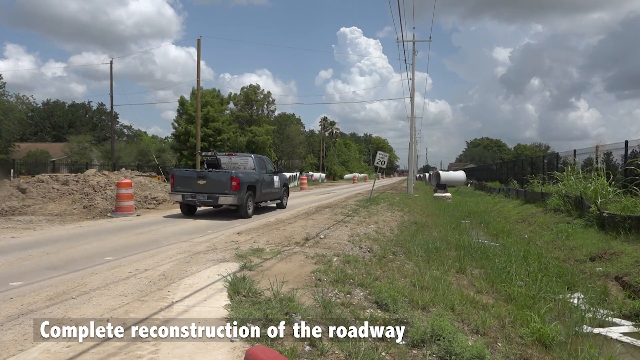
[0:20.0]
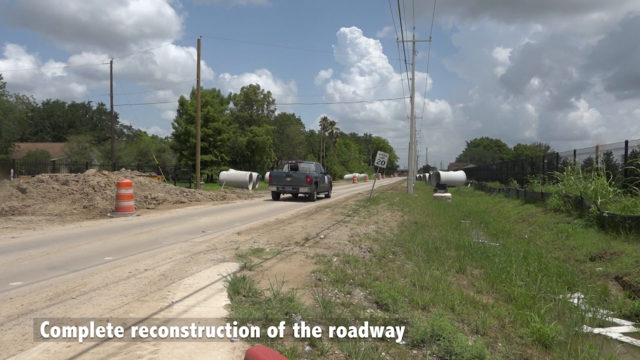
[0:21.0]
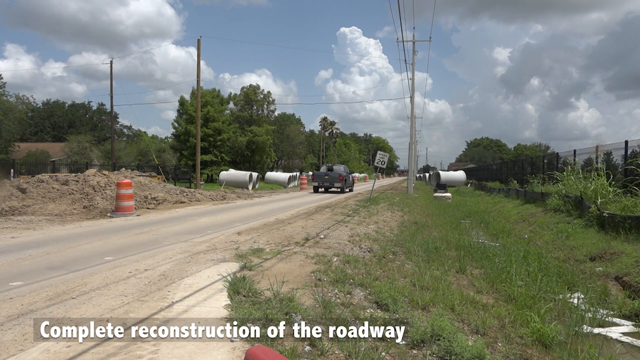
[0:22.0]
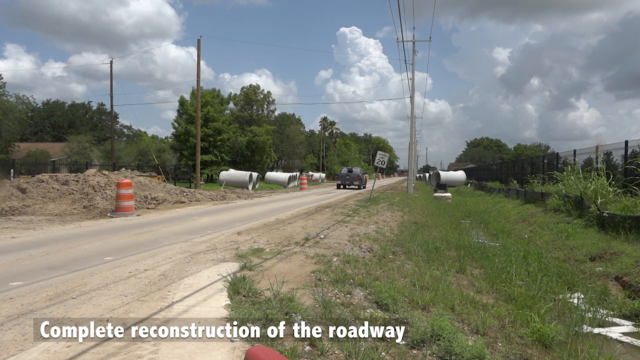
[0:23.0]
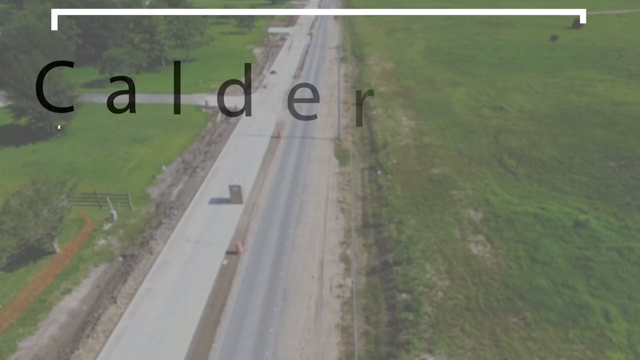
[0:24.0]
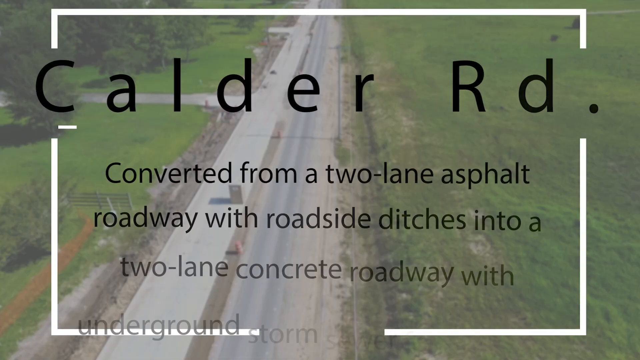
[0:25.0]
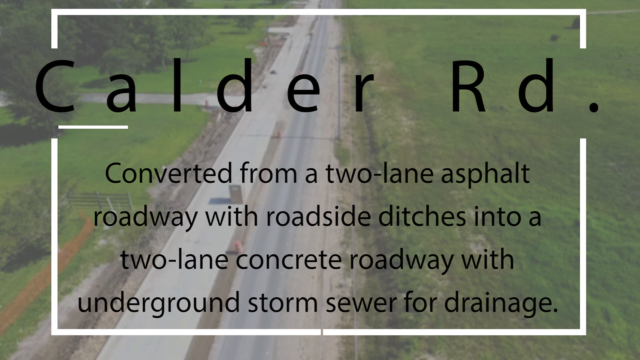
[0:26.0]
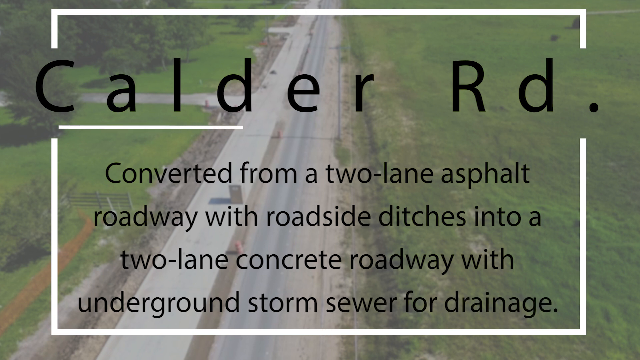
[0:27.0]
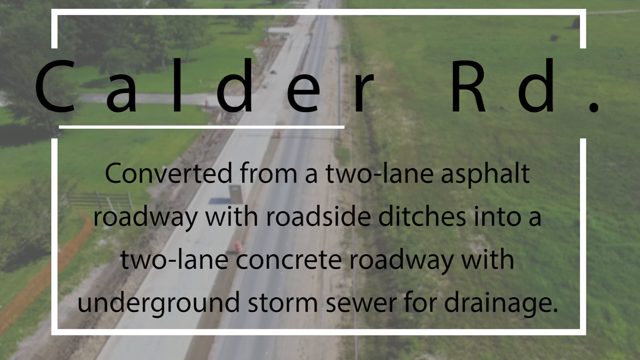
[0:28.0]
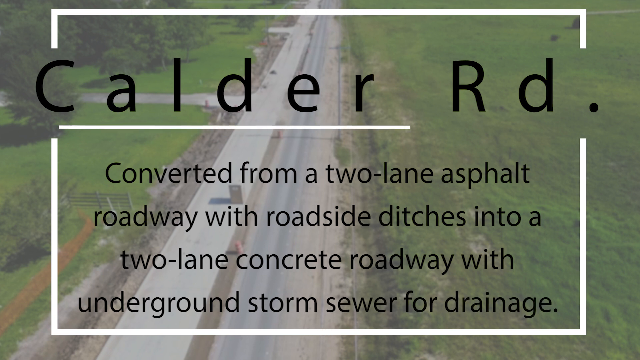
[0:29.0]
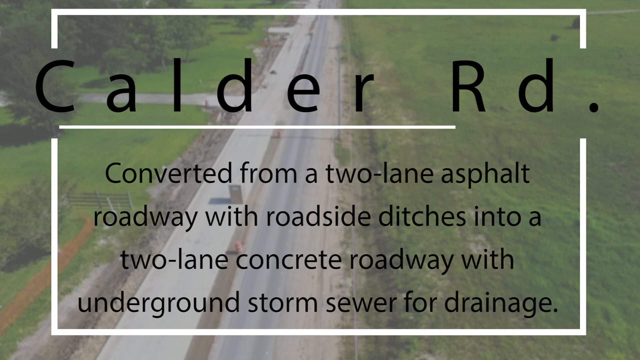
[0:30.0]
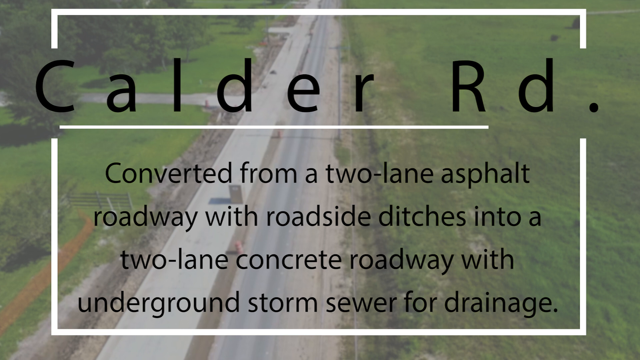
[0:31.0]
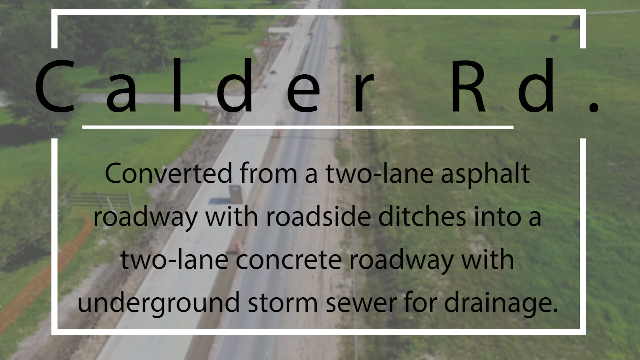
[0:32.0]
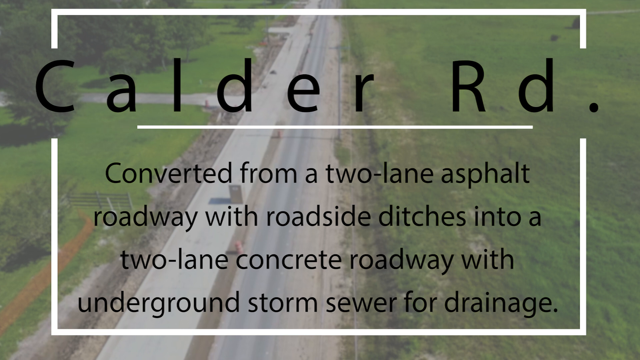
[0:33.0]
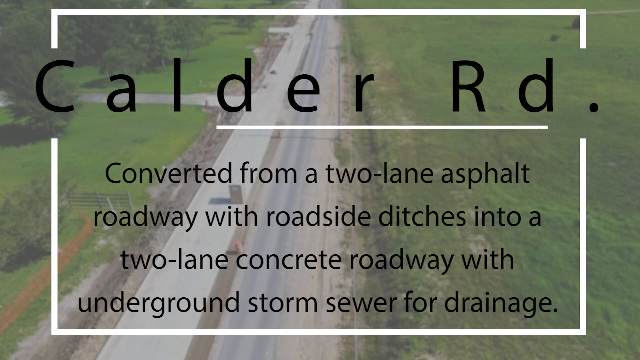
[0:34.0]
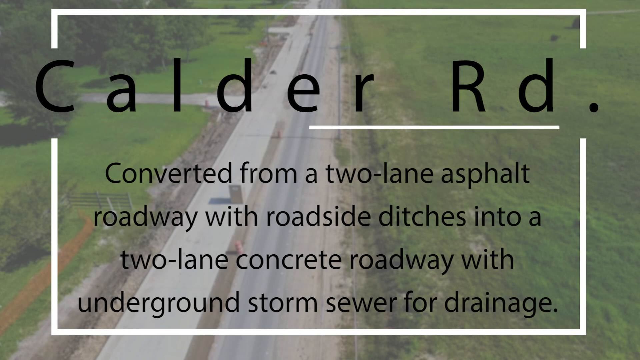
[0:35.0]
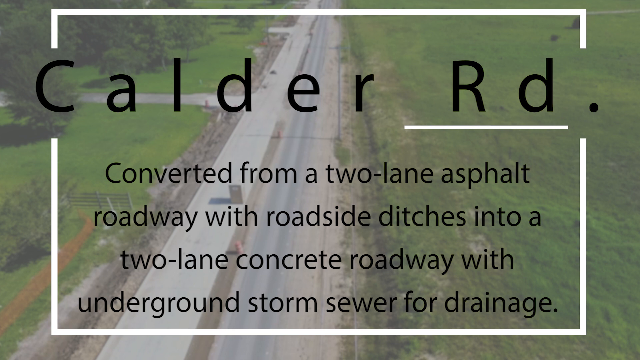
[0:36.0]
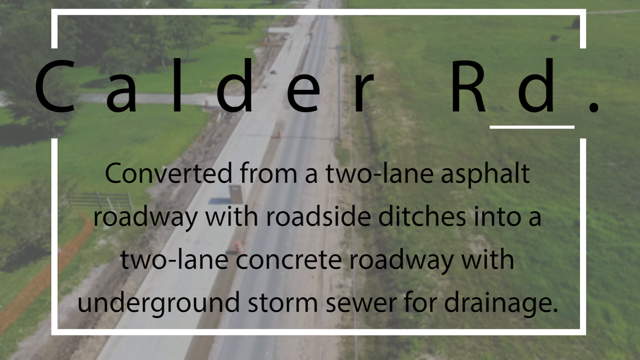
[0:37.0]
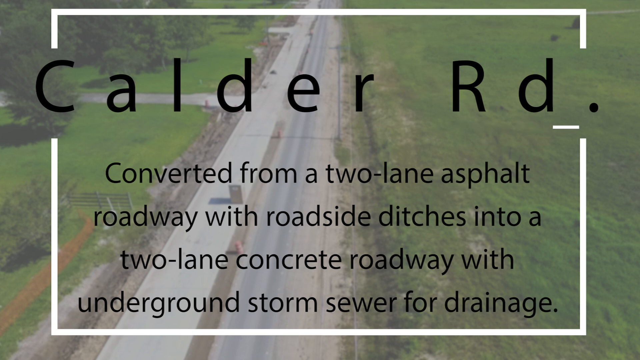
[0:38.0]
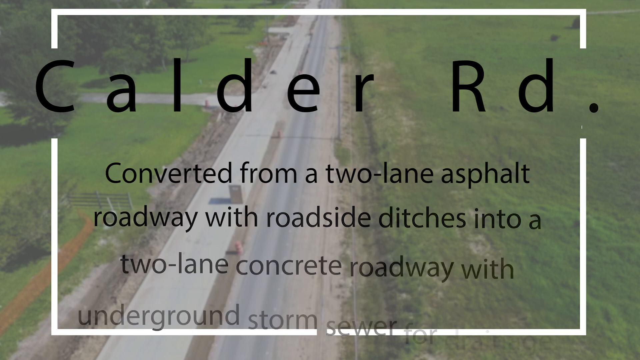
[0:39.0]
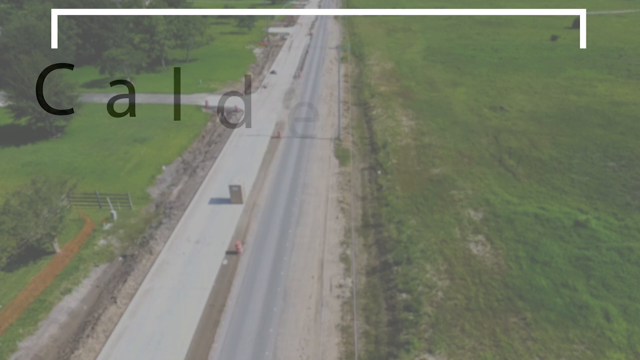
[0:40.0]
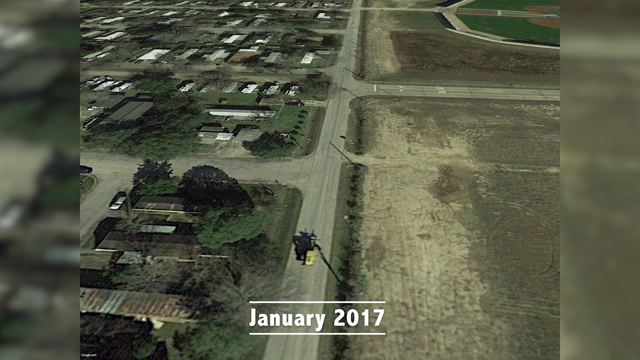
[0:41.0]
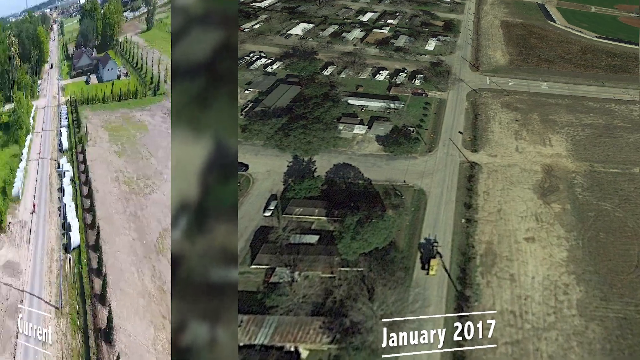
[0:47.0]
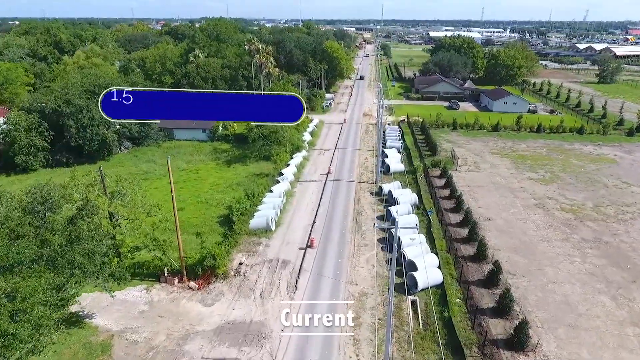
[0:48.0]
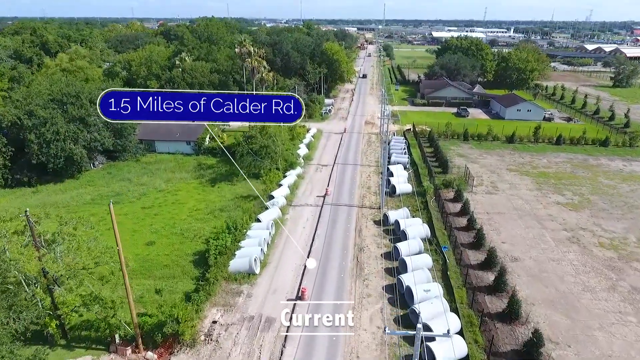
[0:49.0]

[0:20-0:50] As a gray truck drives through, a mound of dirt is on the left side with one of the orange and white striped cylinders, and large white culverts are laid out by the road. Telephone poles stand on each side and trees are in the distance. An aerial view of the street appears with text on the screen describing what Calder Road is going to be like. A white line goes from the left side of the screen to the right side, underlining Calder Road, and then disappears until it vanishes. The video cuts to a picture from January 2017 showing a tall crane, a lot of empty dirt on the left and right sides of the road, and other developments and houses on the left side. The screen shifts to blue, a caption appears over the blue, and the view returns to the bird's-eye view of the area and the 15 miles of Calder Road, with culverts lying on each side.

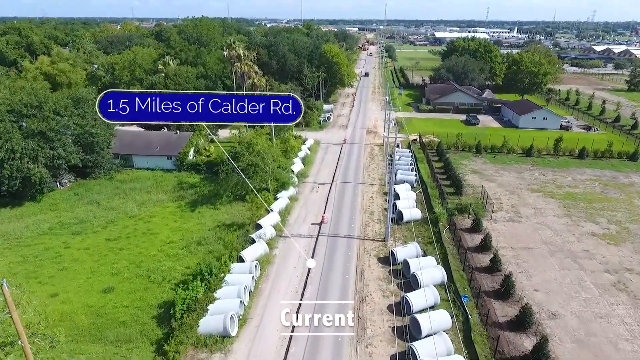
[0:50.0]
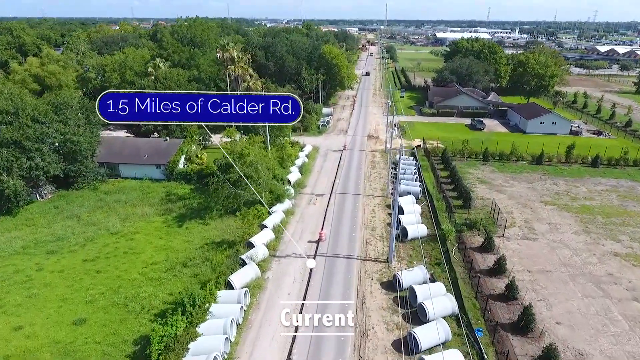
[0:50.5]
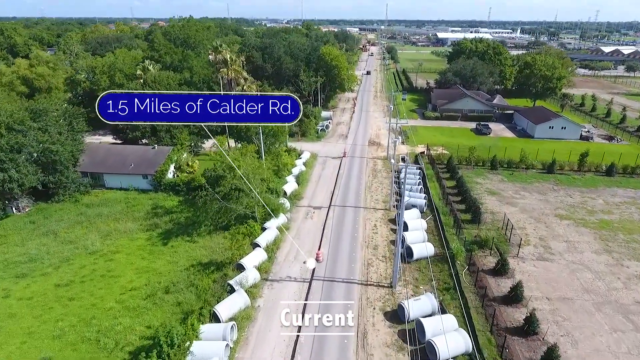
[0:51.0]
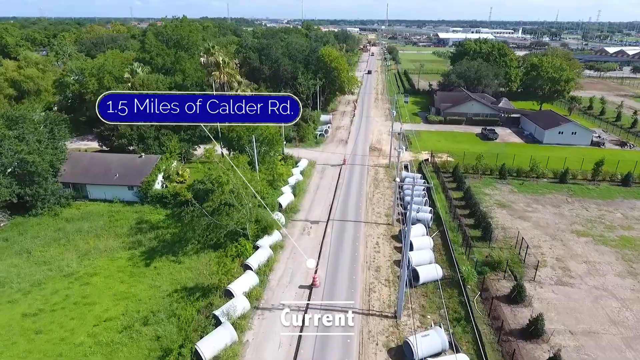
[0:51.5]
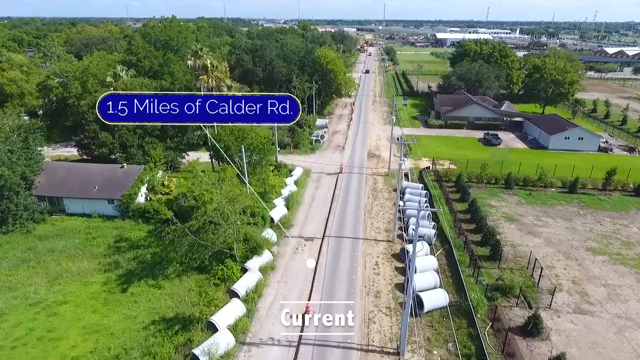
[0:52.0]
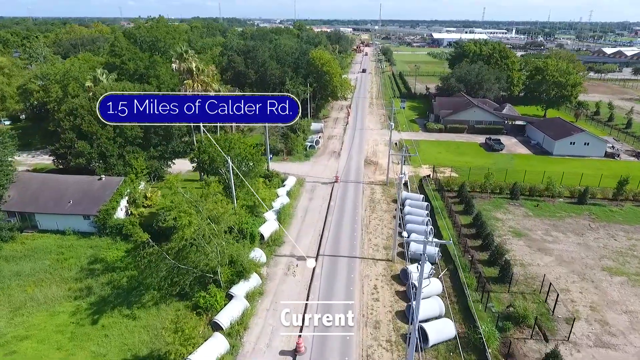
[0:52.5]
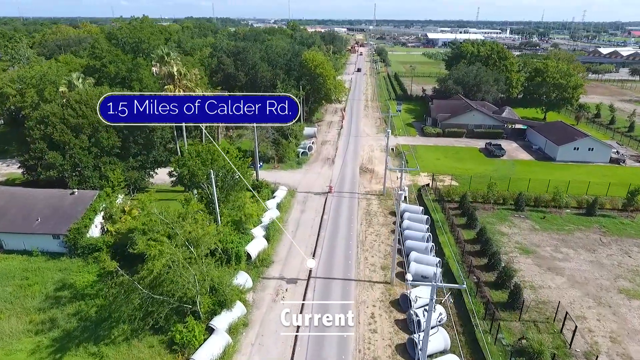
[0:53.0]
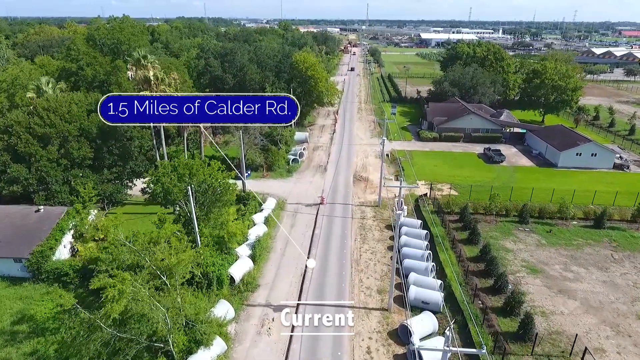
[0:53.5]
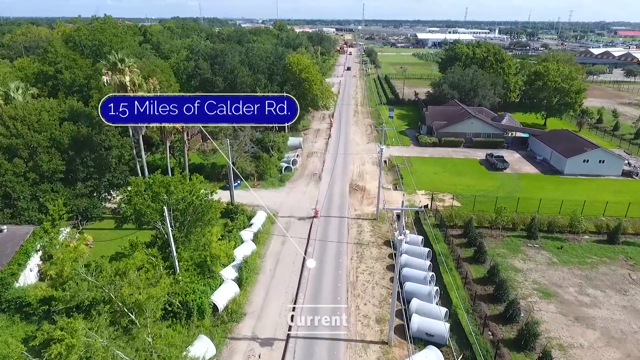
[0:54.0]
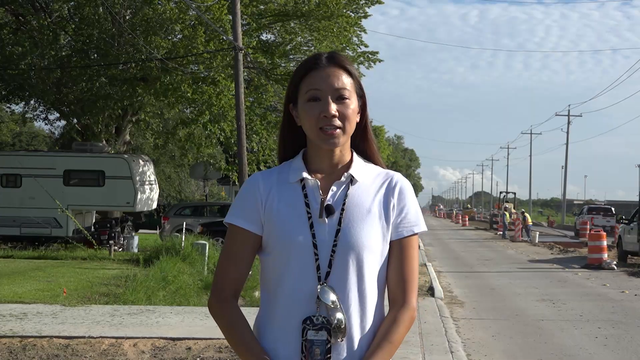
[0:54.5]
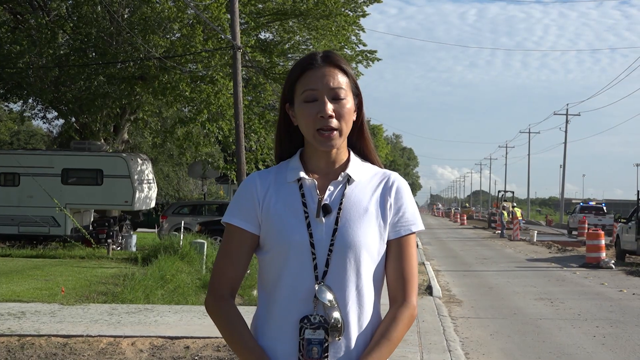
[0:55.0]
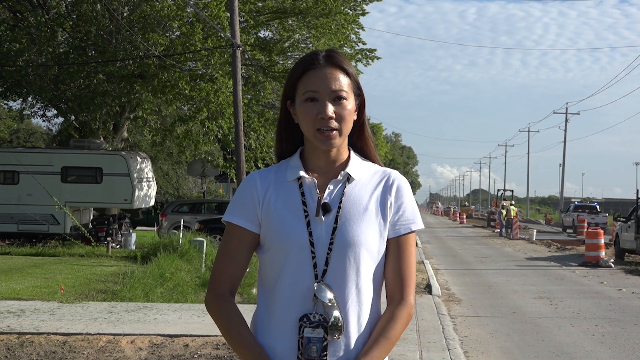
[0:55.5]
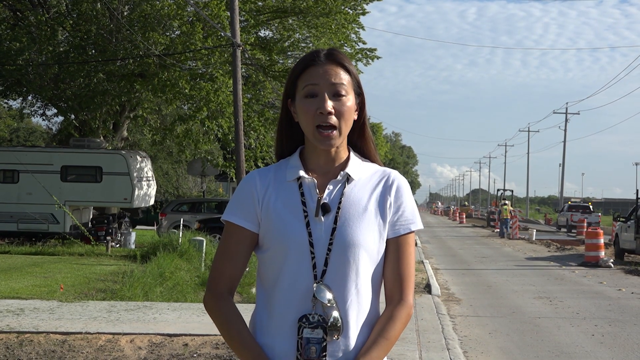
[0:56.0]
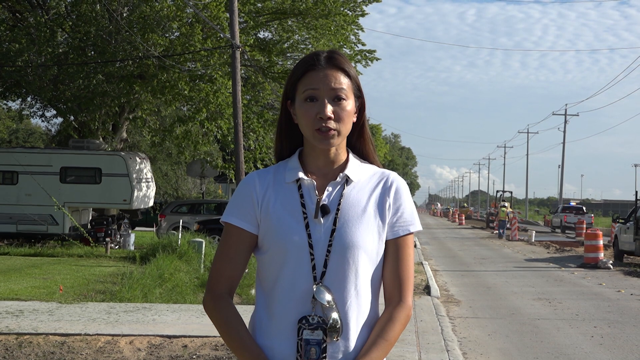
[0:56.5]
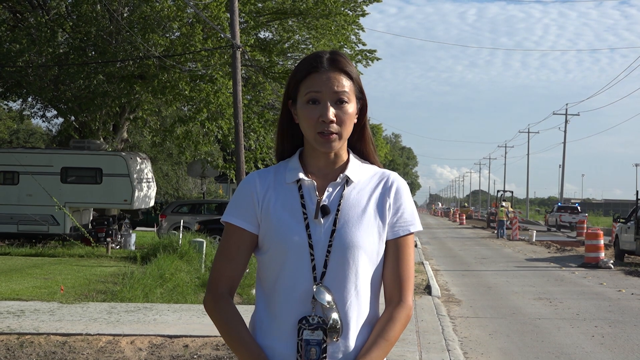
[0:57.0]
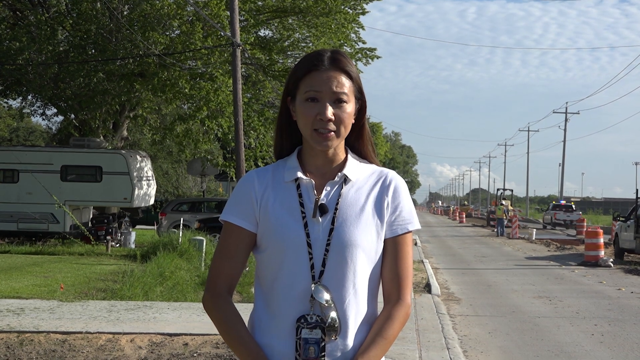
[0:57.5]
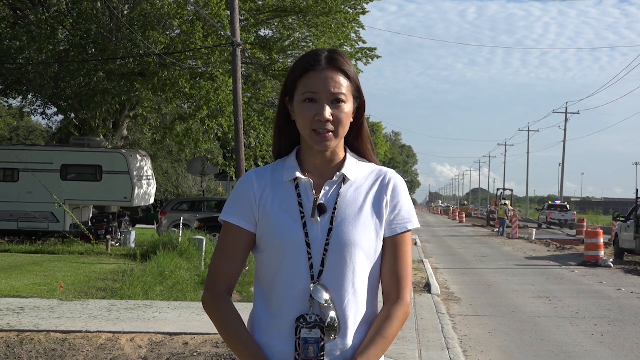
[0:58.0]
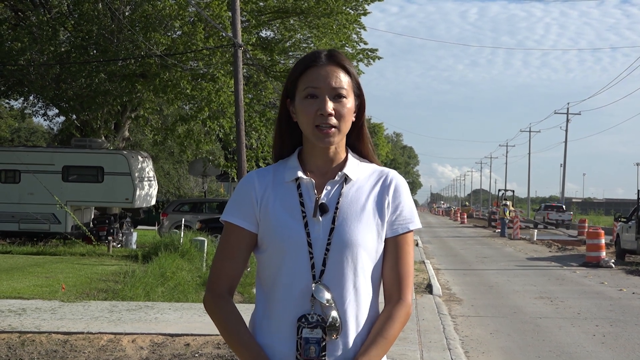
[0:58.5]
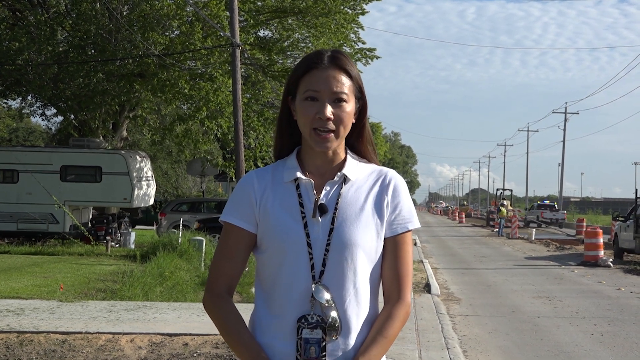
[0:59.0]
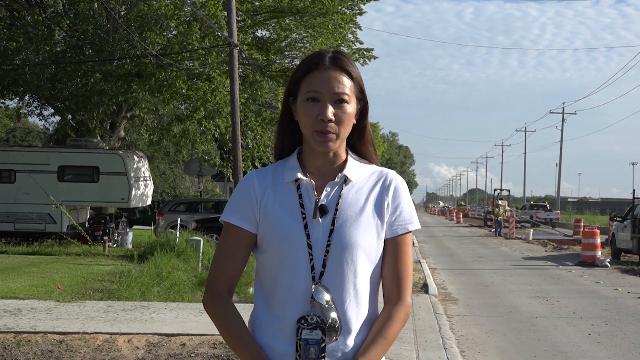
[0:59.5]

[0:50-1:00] A small call-out connects to a little white dot that runs along the center of the road as the camera zooms over. The video cuts back to the young woman, who is talking; she is very expressive with her eyes and maintains good eye contact with the camera. On the right side of the screen a white service truck drives by, and there are construction workers in yellow vests and other construction equipment. On the left side is what looks like a residential lot, with a camper trailer on the grassy yard and lots of trees behind her.